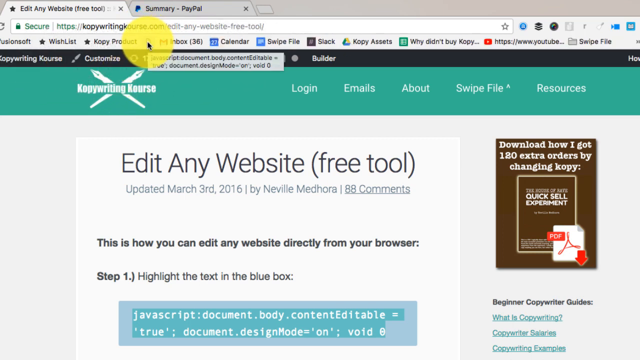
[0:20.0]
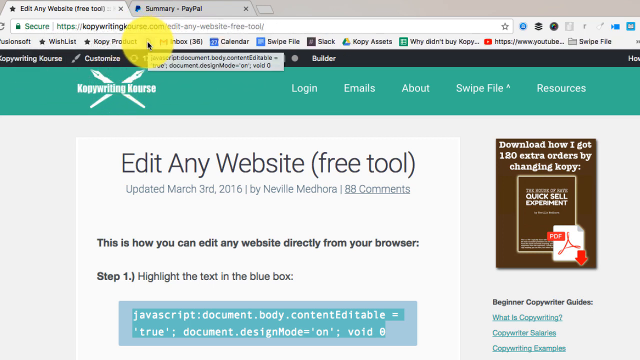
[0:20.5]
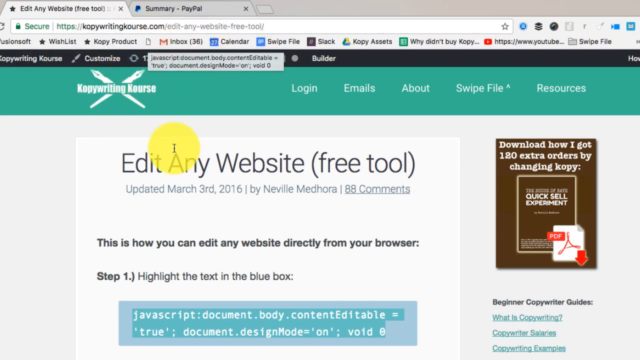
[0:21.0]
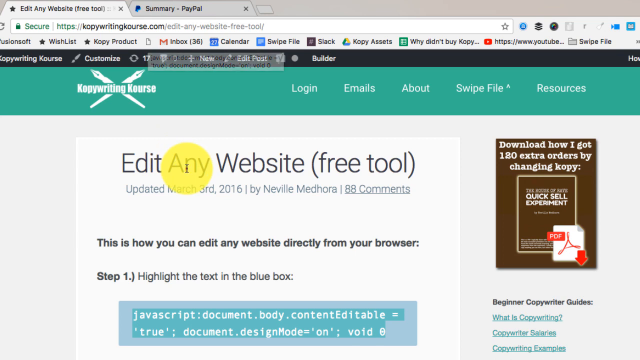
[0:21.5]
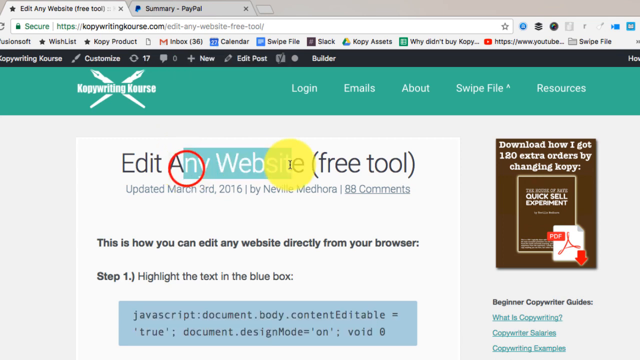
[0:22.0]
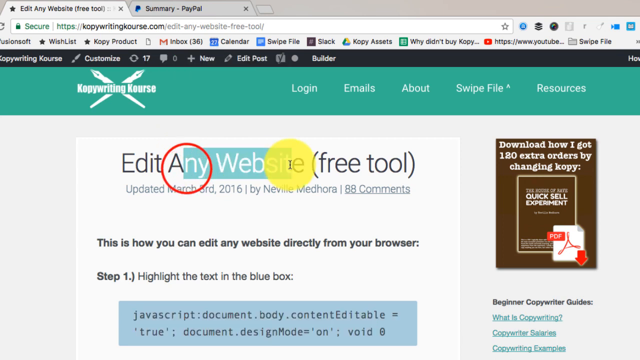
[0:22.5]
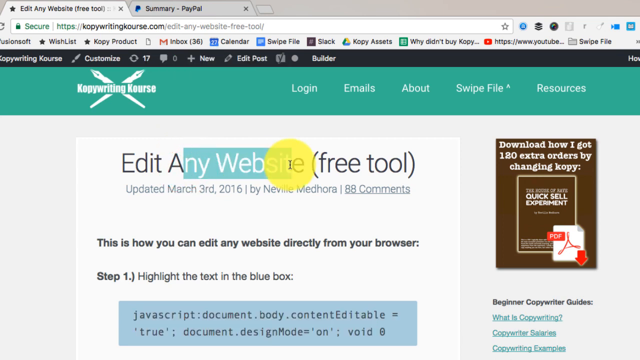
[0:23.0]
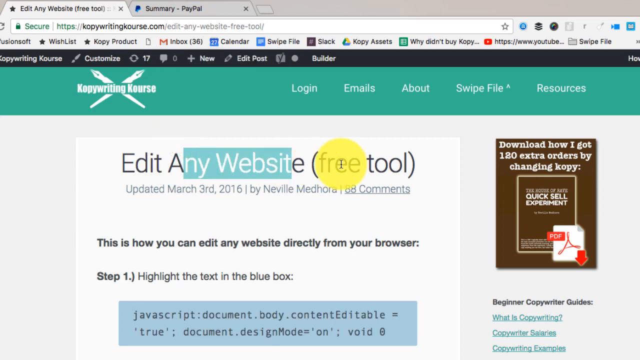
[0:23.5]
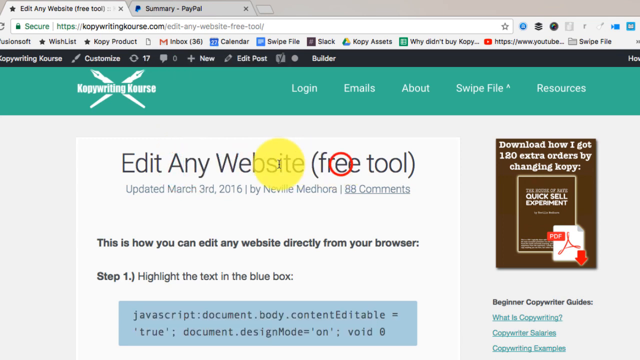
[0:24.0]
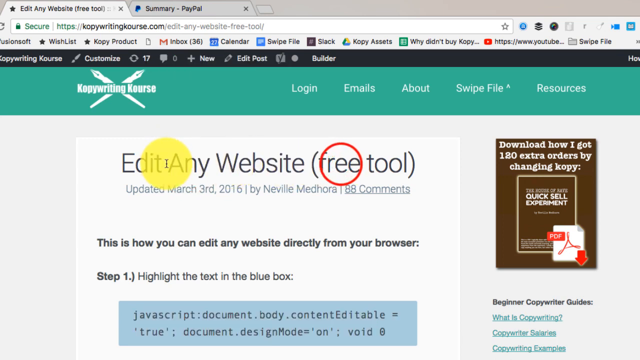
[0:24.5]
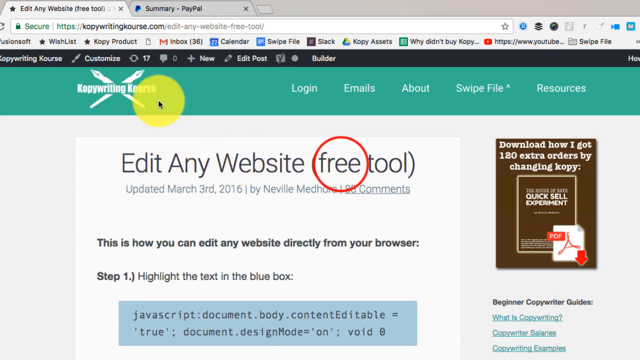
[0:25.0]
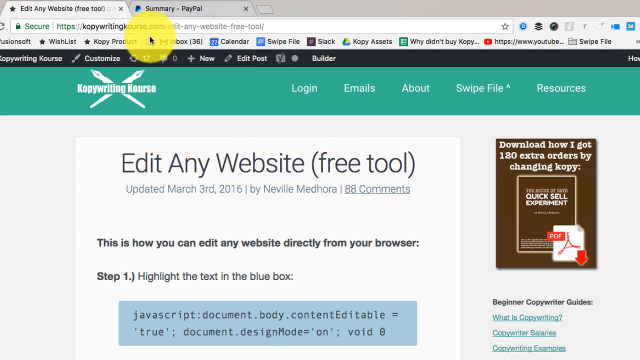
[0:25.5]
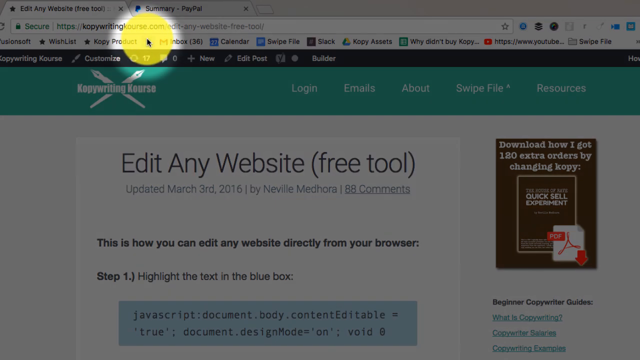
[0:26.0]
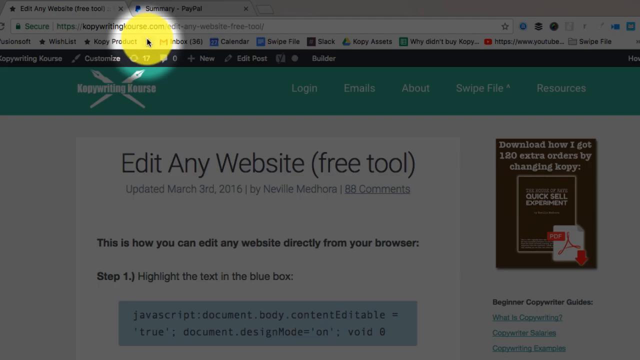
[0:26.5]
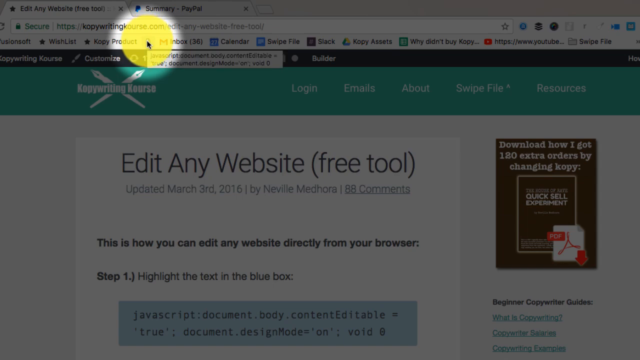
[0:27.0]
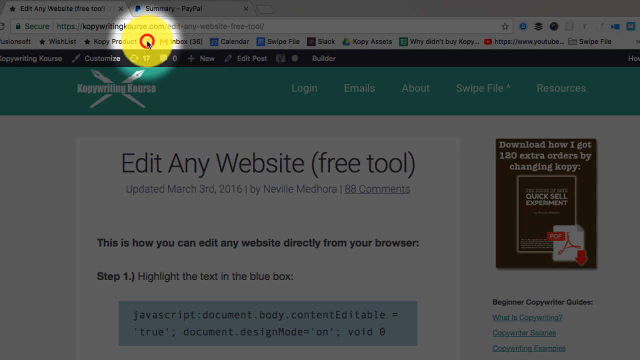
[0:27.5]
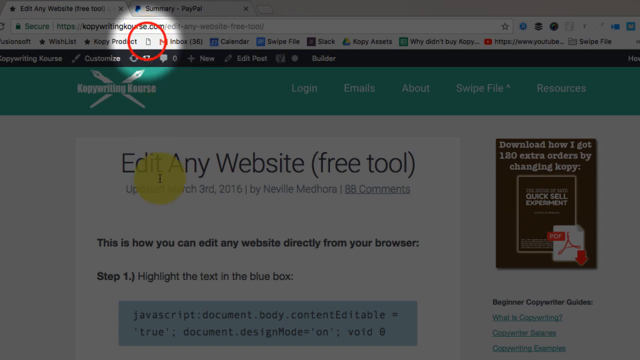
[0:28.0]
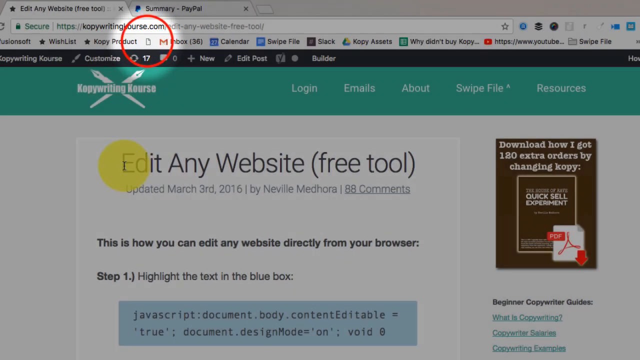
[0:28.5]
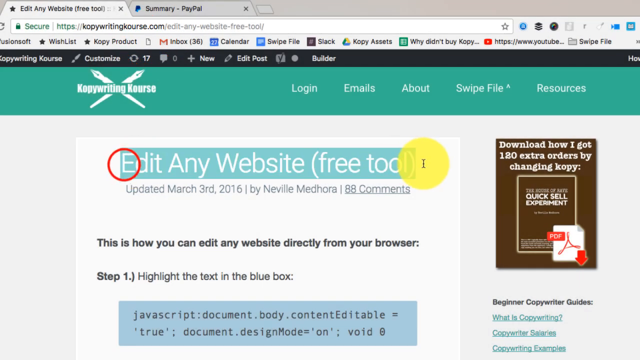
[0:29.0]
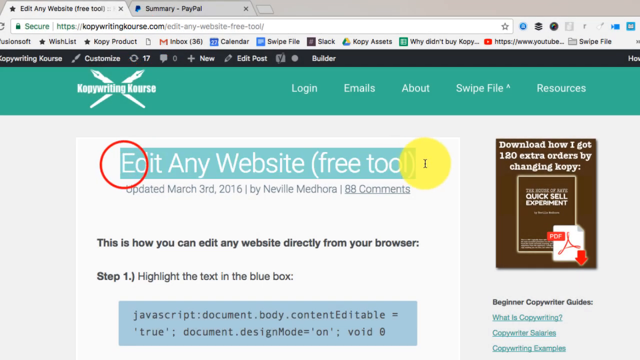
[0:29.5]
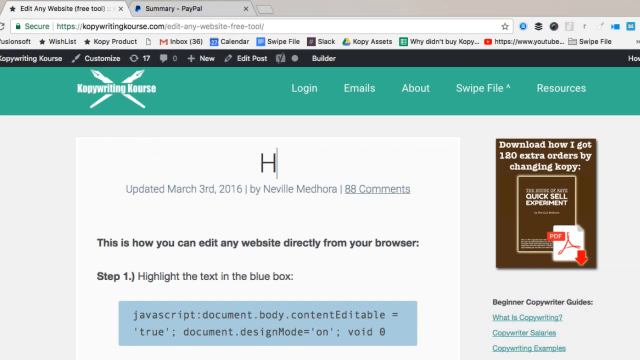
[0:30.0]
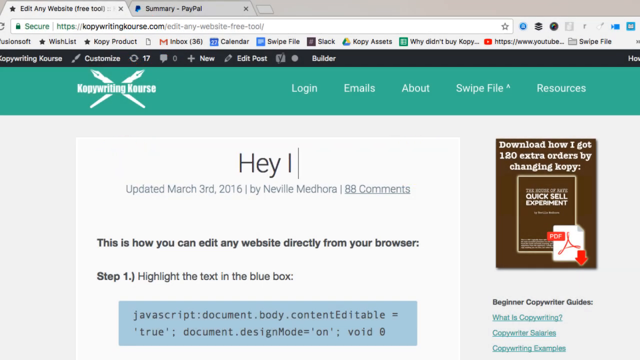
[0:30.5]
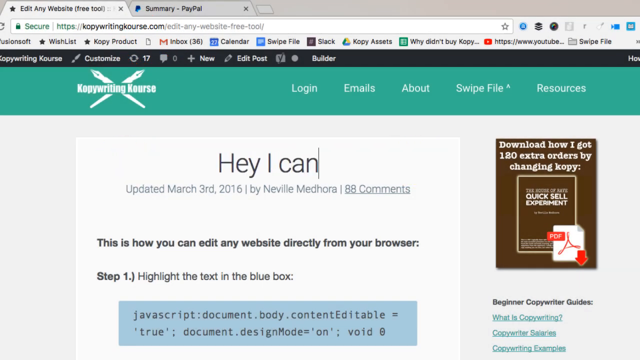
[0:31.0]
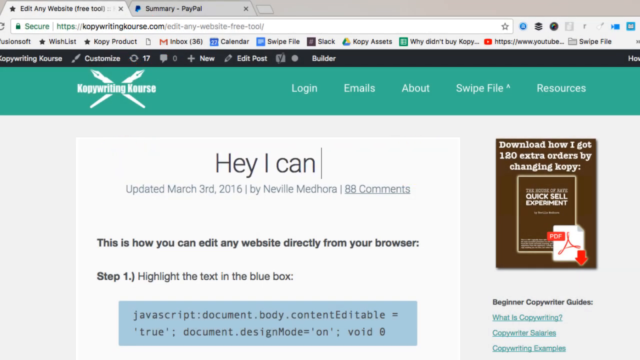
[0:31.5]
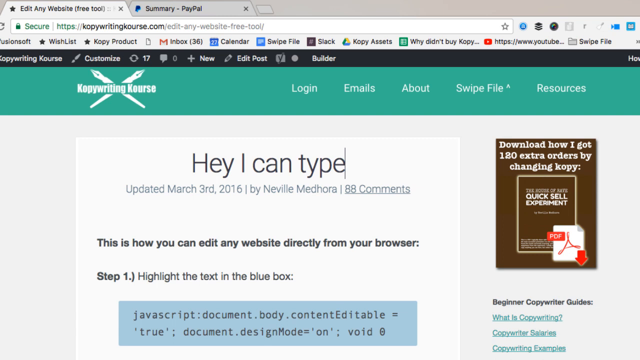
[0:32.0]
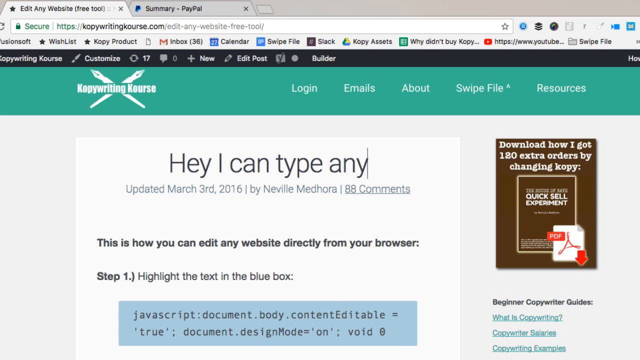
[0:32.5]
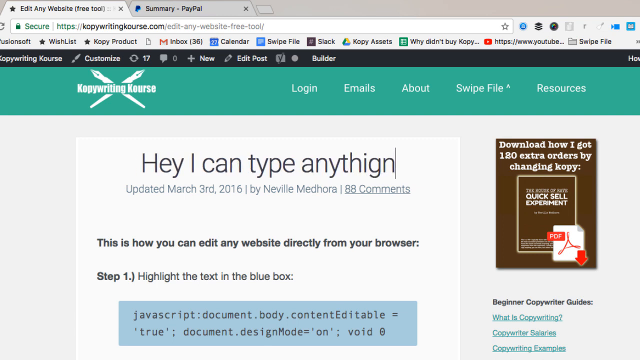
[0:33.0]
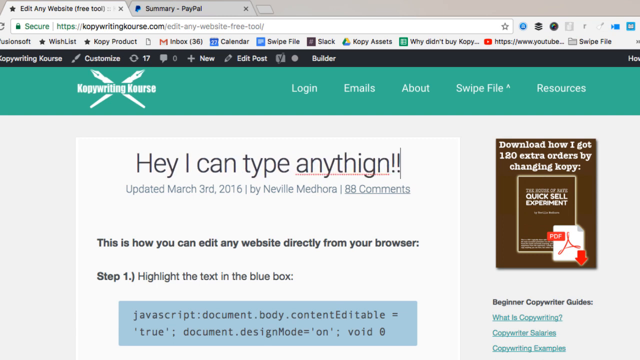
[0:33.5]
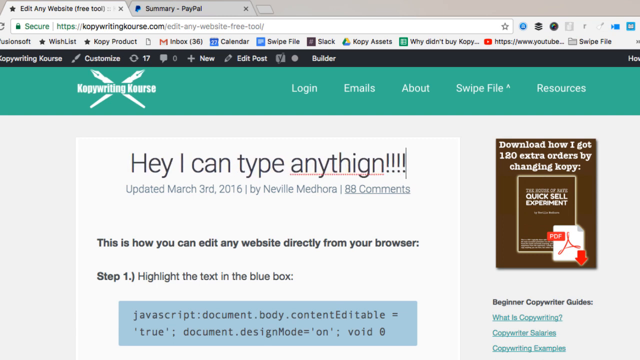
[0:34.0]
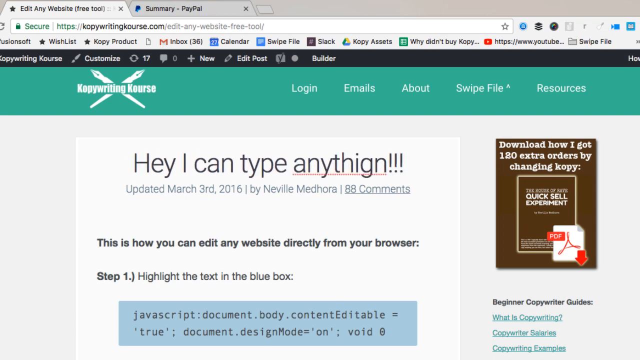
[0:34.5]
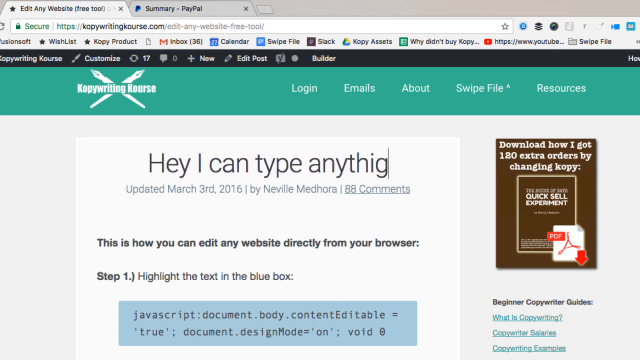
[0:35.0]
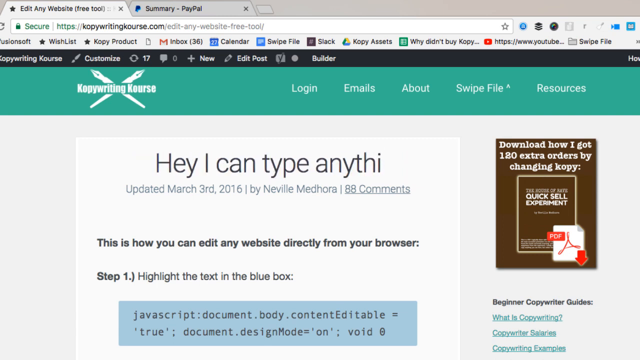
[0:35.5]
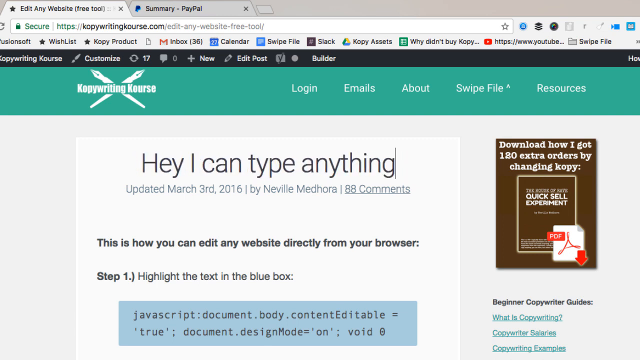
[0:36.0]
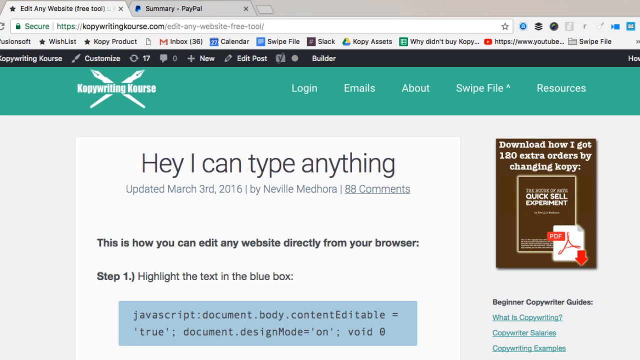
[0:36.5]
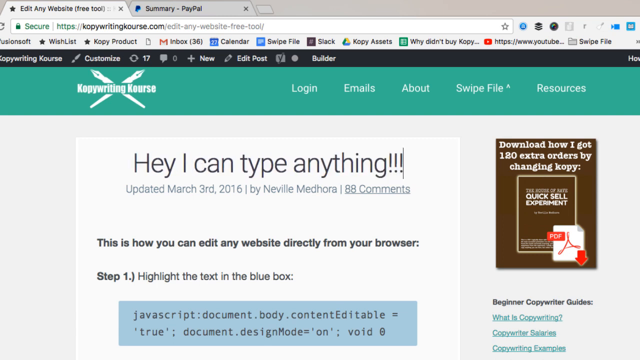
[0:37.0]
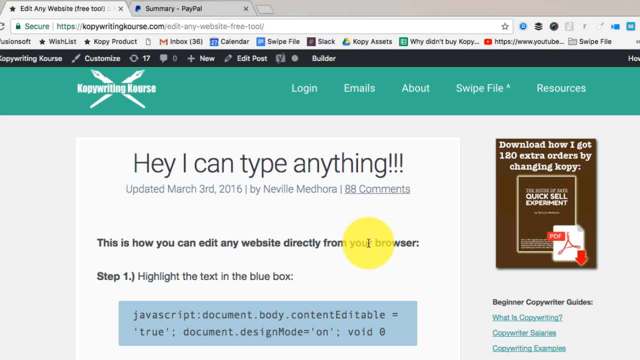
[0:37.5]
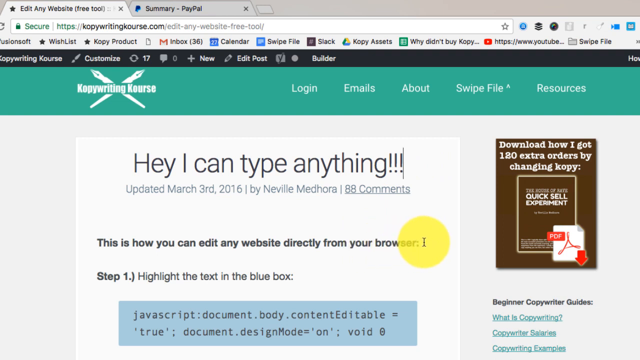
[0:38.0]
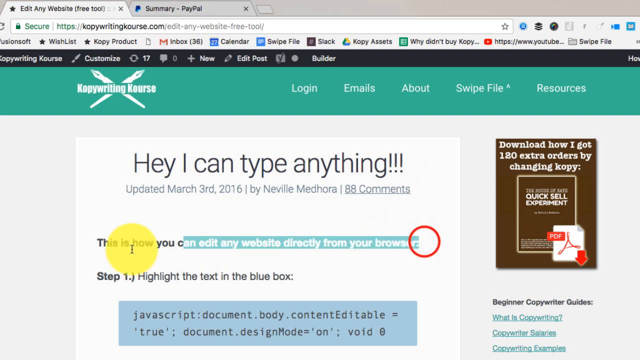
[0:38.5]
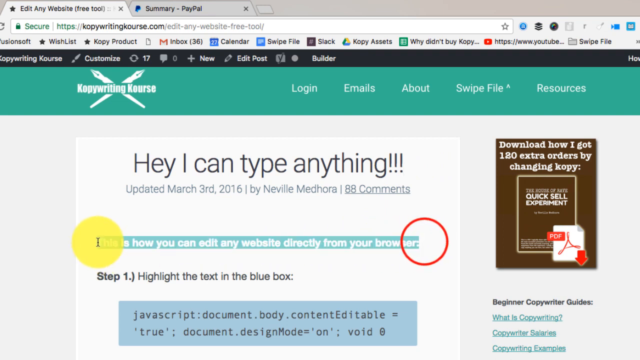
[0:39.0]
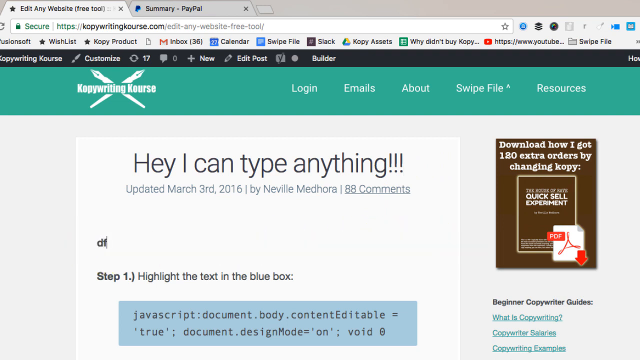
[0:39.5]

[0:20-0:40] On the Kopywriting Kourse website, someone is attempting to edit a website by following the steps on the page. A header at the top says "Edit Any Website (free tool)," and below it are steps for doing this, including highlighting the text in the blue box on the screen. At the start, the script from the box has been copied and dragged to the top of the screen, where the cursor is surrounded by a yellow circle. This disappears, and the cursor moves down over the "Edit Any Website" line, then back up to the toolbar, where it clicks on the page icon, which is circled in red and highlighted while the rest of the screen appears to get darker. The cursor then highlights the line "Edit Any Website (free tool)," which disappears, and someone types a new line in its place reading "Hey, I can type anything!!!" The cursor highlights another line of text on the page, which changes to a string of nonsense letters.